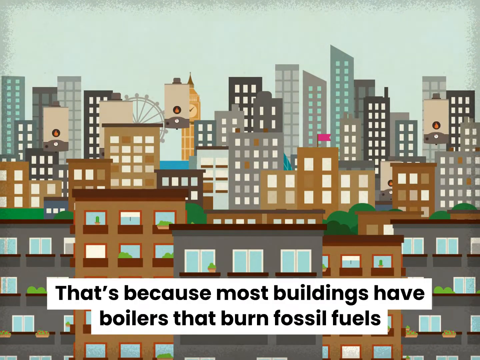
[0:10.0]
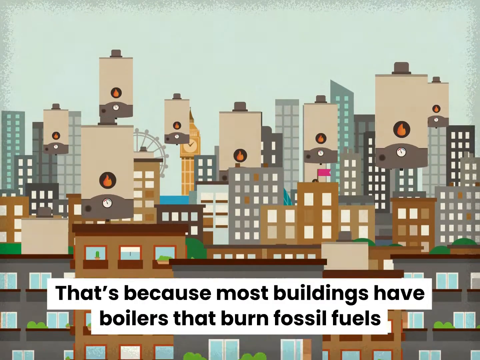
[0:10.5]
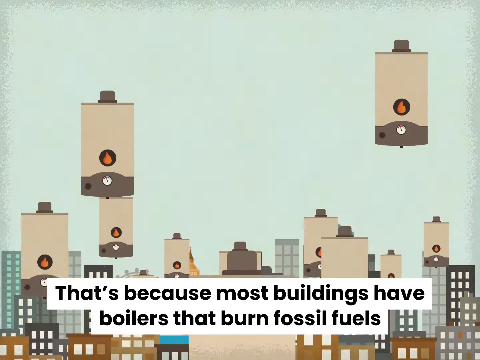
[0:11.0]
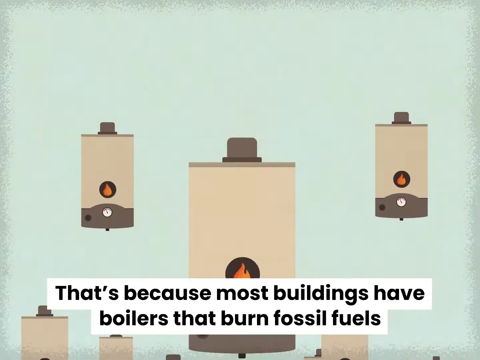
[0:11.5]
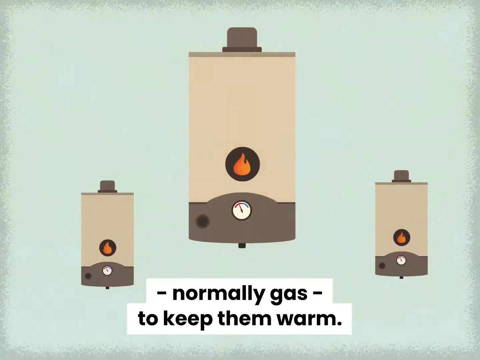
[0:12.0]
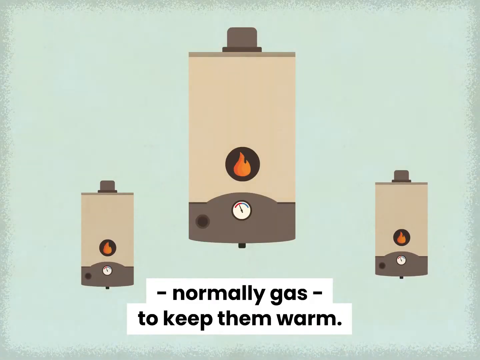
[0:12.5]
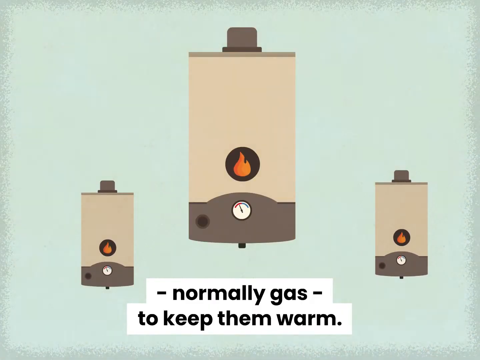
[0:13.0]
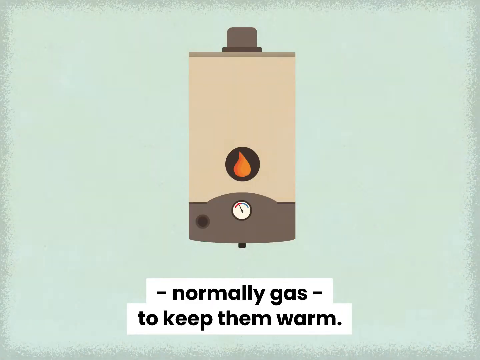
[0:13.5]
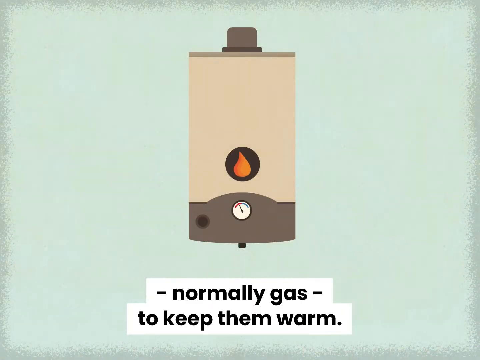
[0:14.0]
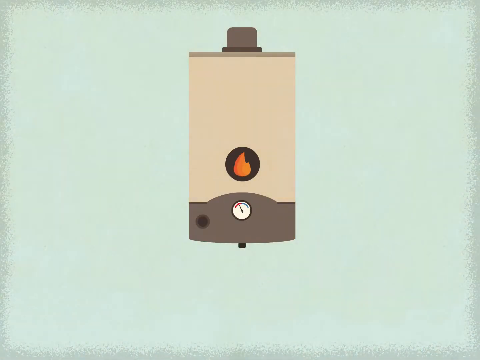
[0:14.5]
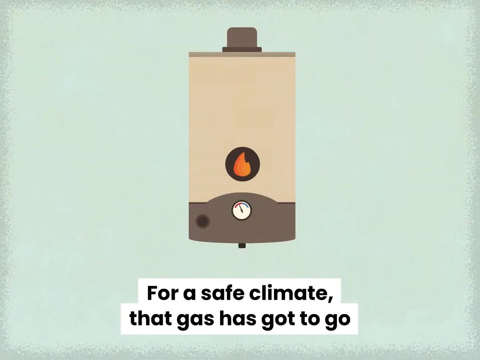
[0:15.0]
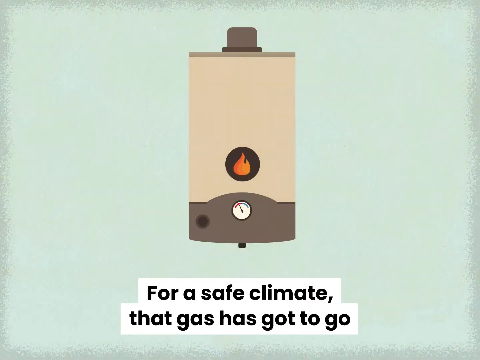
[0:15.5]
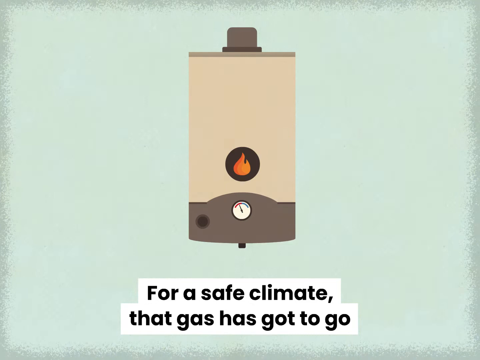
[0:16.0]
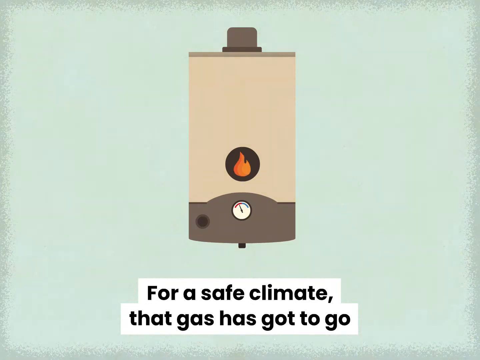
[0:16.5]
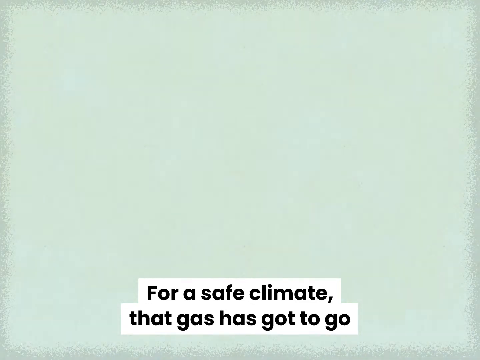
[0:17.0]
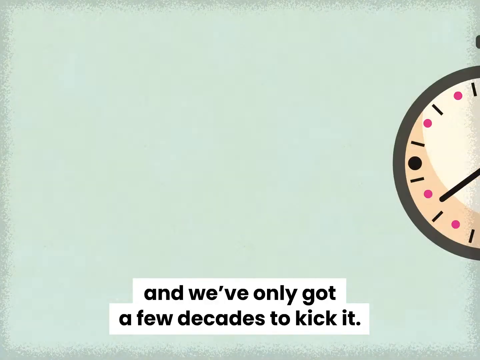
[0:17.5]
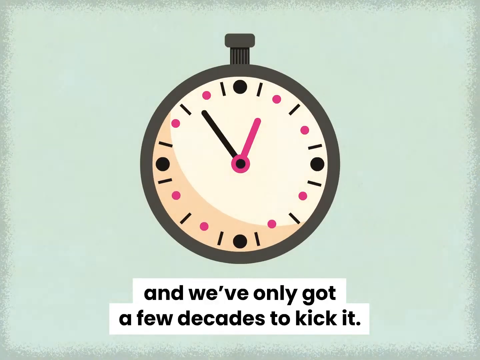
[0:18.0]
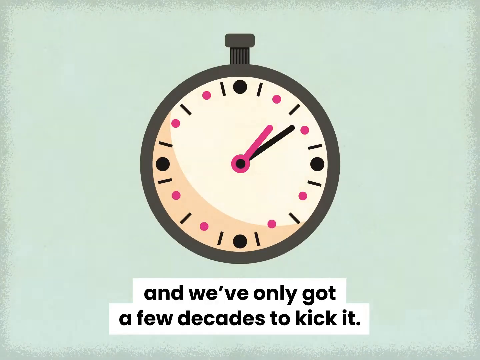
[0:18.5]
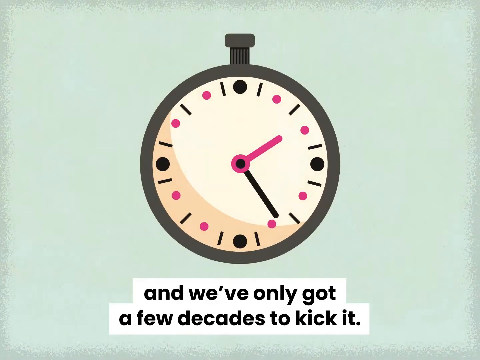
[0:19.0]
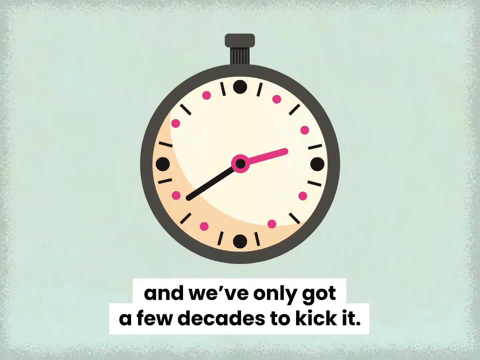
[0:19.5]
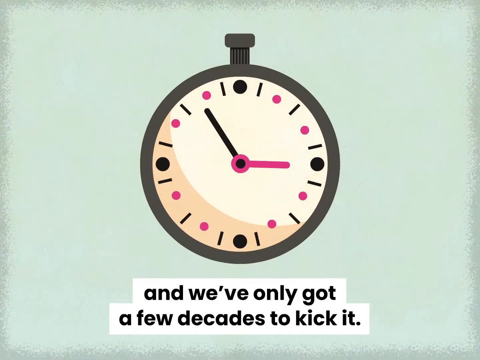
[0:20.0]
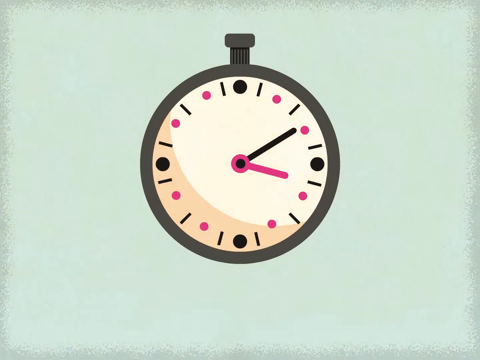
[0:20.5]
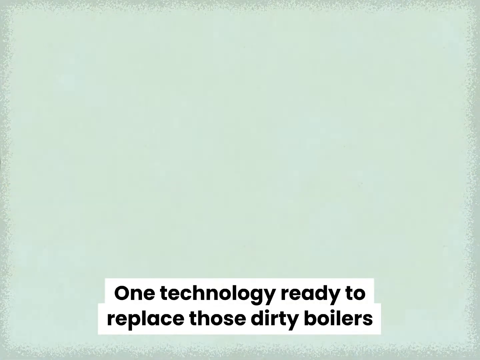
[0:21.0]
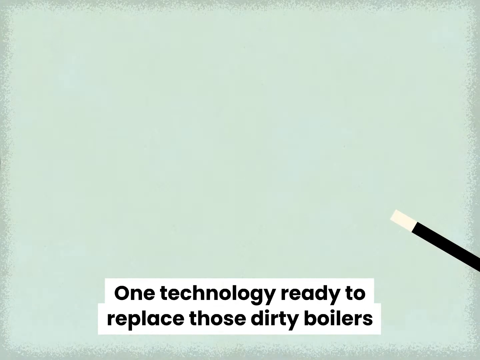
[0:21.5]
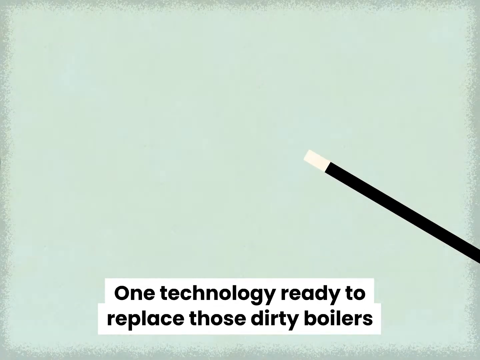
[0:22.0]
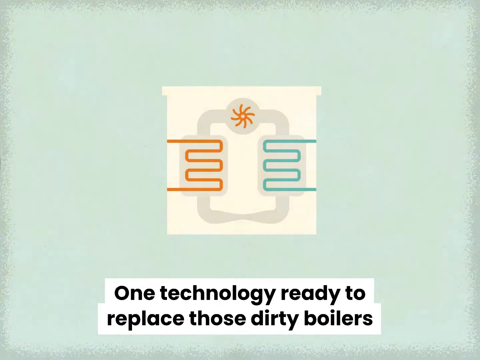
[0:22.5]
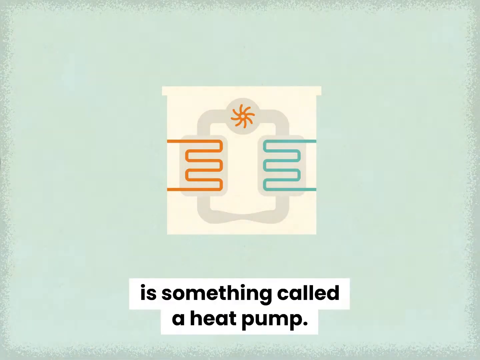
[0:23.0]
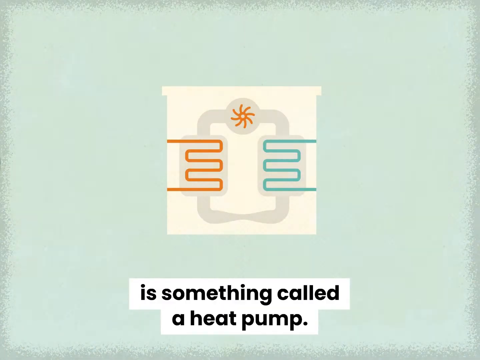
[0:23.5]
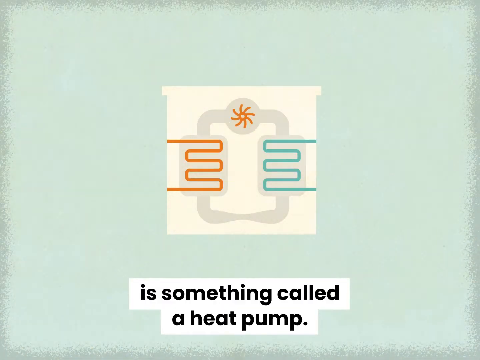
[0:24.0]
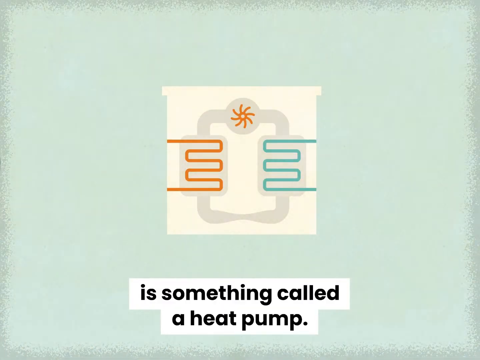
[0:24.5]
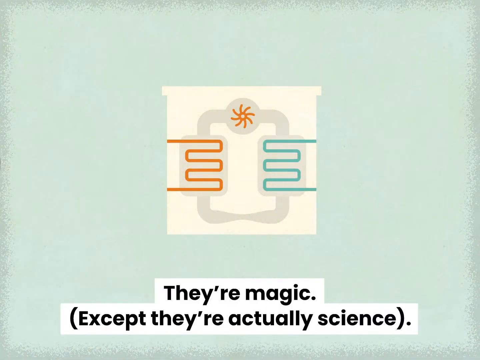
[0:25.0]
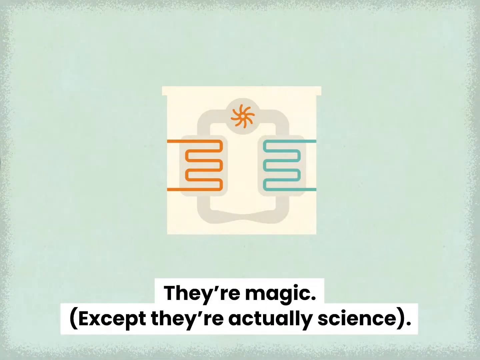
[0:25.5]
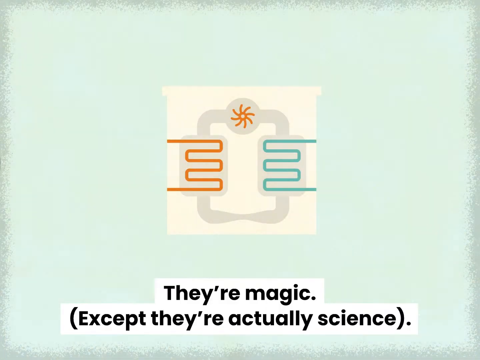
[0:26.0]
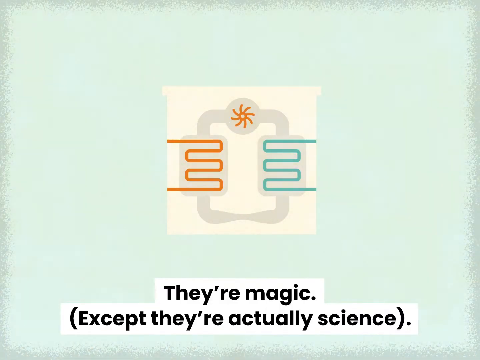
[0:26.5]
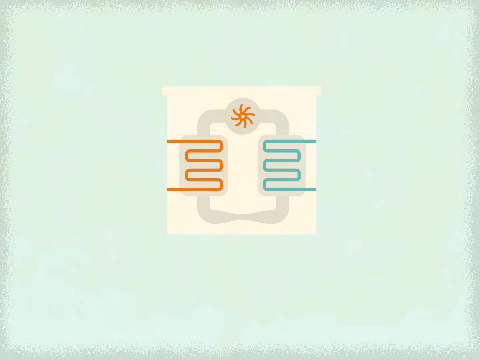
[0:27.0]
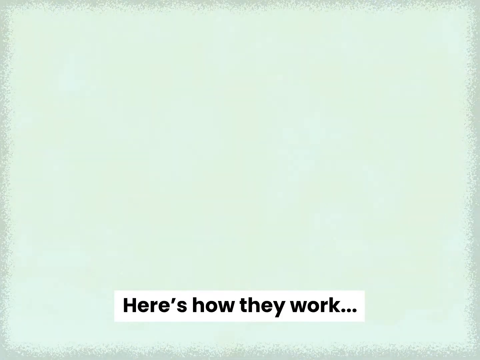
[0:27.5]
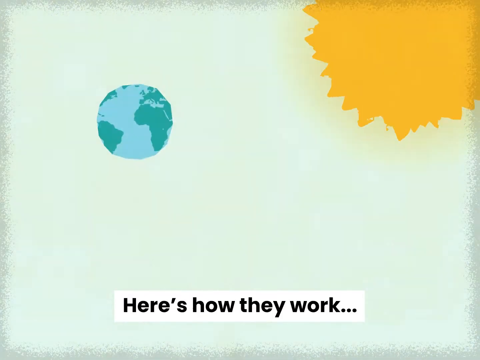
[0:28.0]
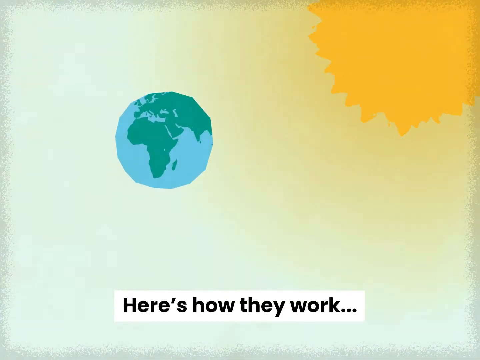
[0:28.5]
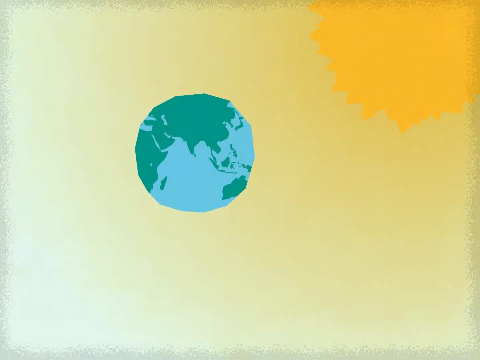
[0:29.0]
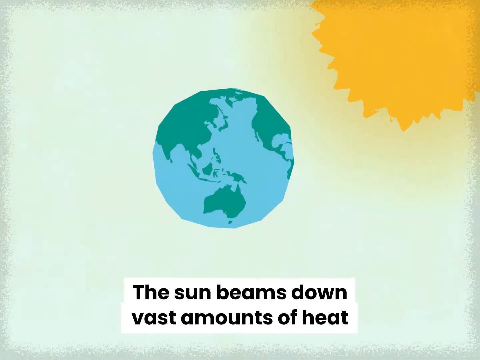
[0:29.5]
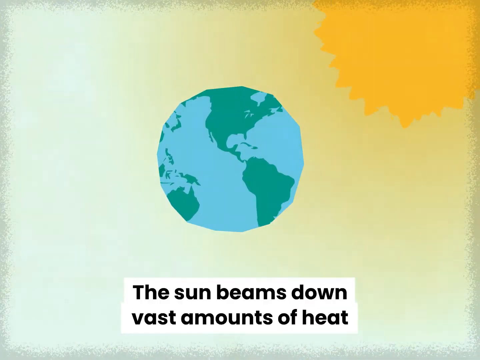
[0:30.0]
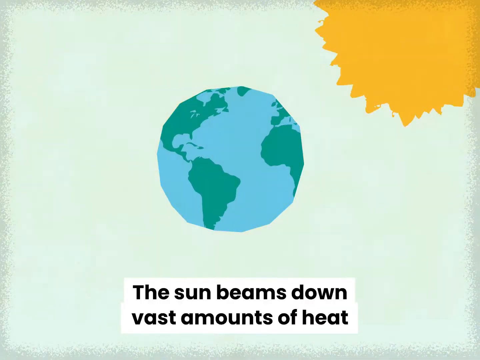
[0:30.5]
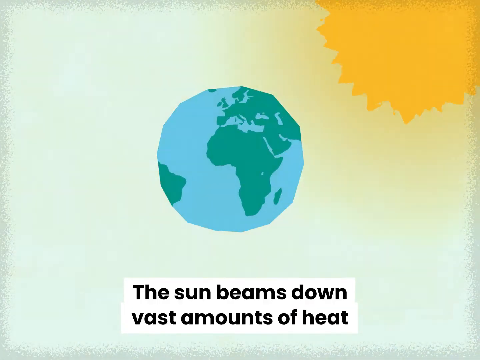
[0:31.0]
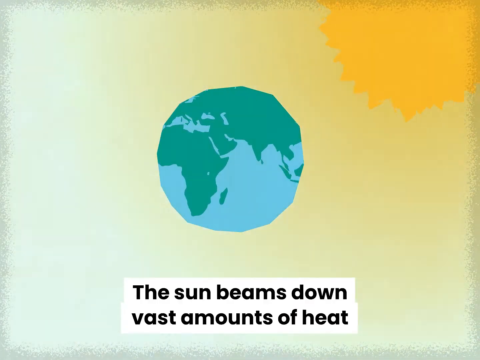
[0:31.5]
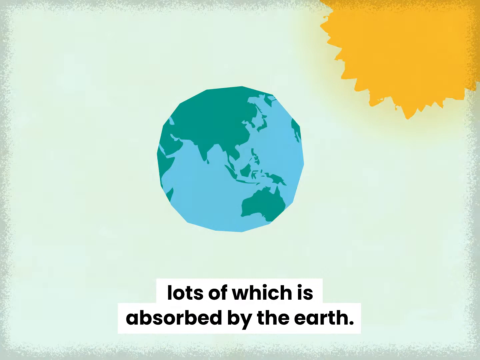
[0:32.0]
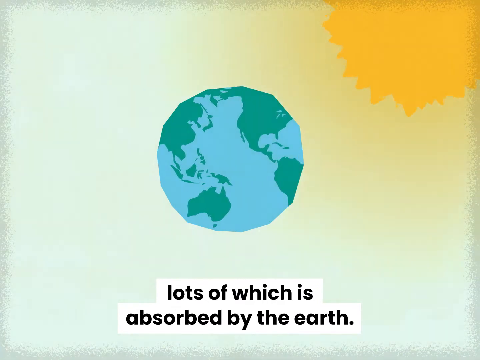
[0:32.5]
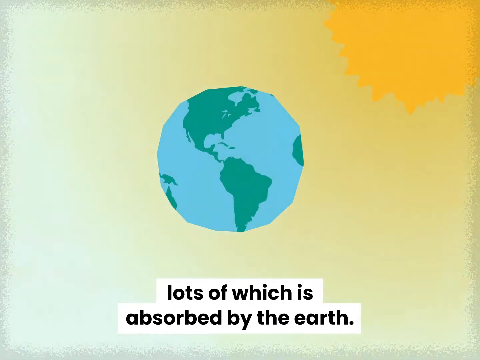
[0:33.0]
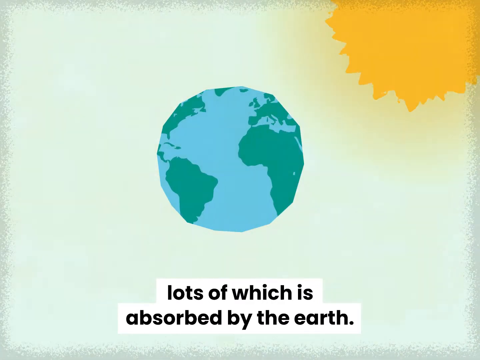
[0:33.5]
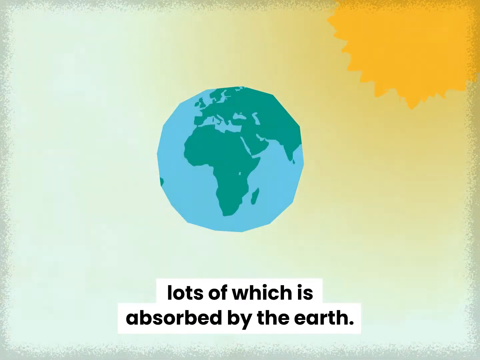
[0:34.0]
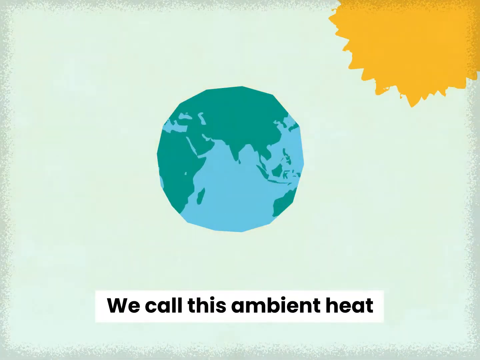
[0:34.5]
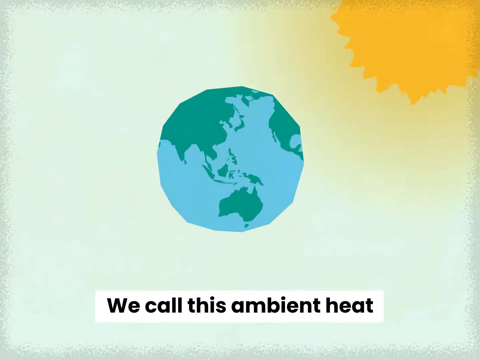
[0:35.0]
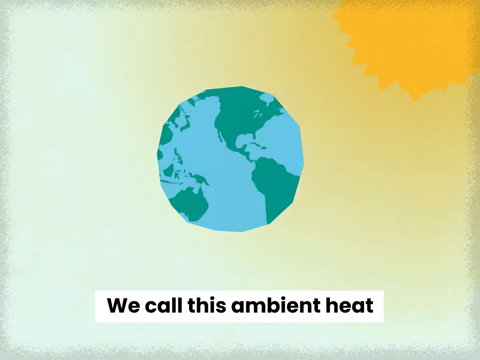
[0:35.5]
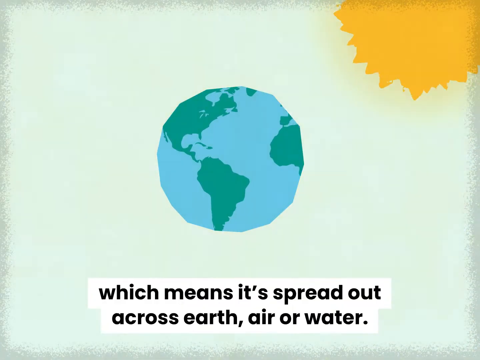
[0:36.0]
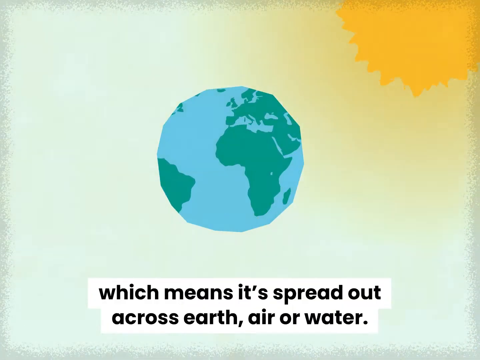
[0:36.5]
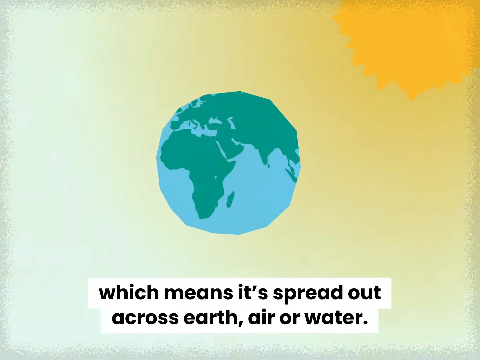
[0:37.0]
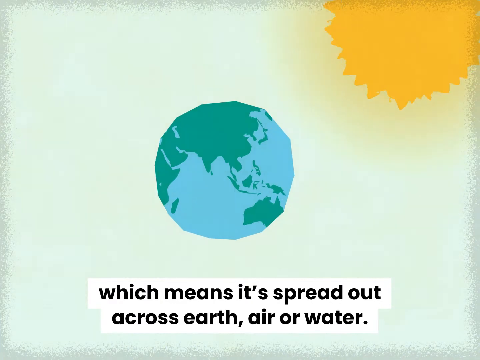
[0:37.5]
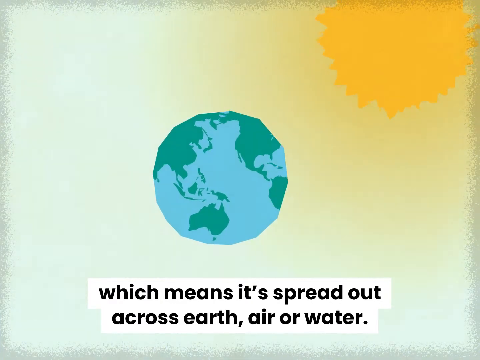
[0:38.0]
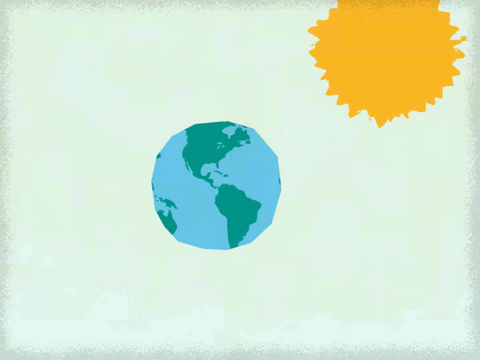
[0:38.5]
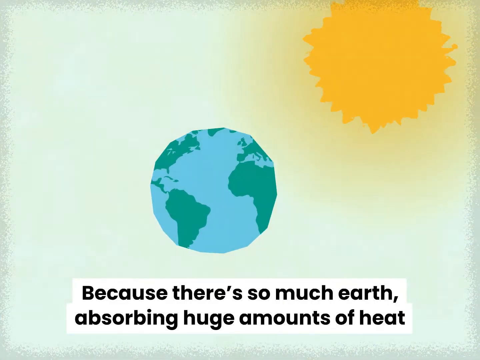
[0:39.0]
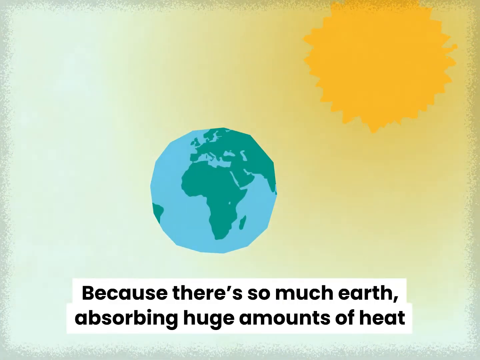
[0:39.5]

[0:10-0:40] More subtitles appear at the bottom, reading "that's because most buildings have boilers that burn fossil fuels," while a visual shows some burners flaming on and heating up. The subtitles continue: "normally gas to keep them warm. For a safe climate that gas has got to go and we've only got a few decades," then "One technology ready to replace those dirty boilers is something called a heat pump. They're magic except they're actually science. Here's how they work. The sun beams down vast amounts of heat, lots of which is absorbed by the earth. We call this ambient heat." The Earth is shown spinning, with the sun in the top right.